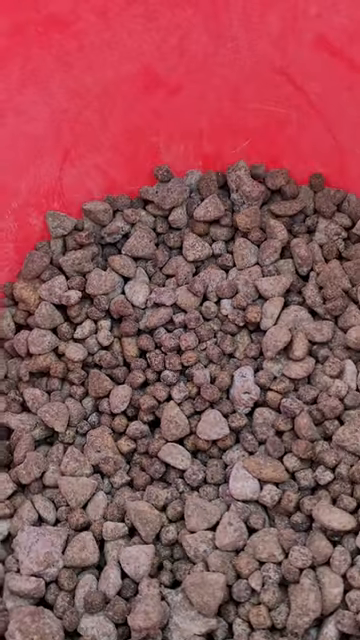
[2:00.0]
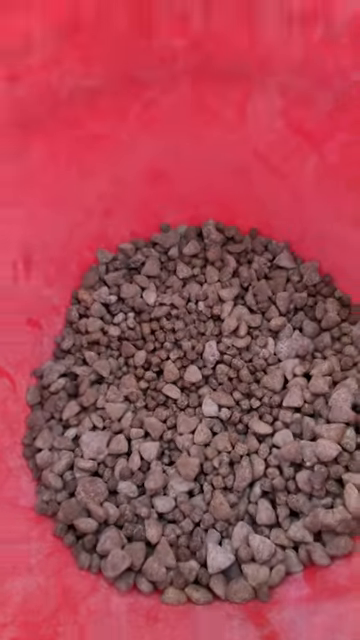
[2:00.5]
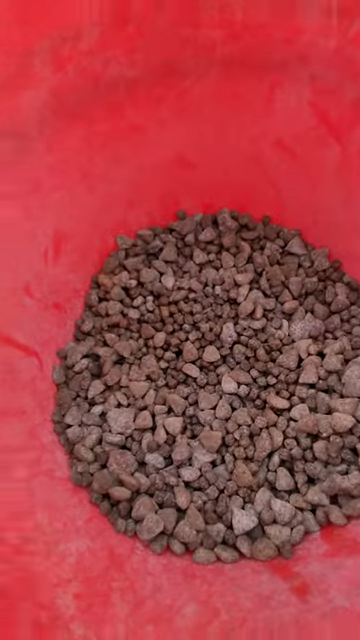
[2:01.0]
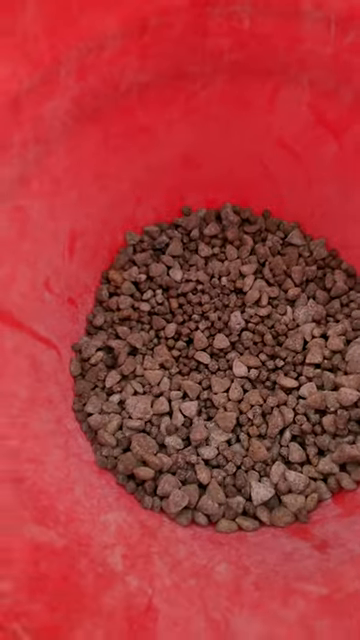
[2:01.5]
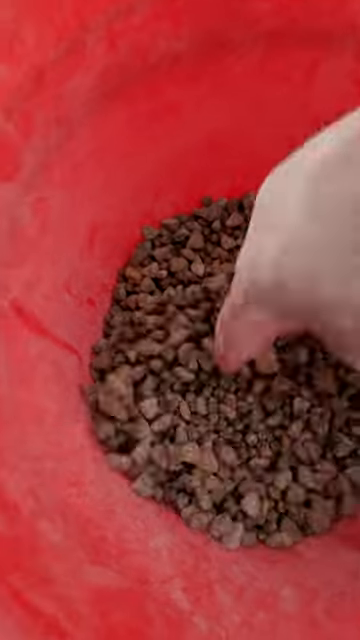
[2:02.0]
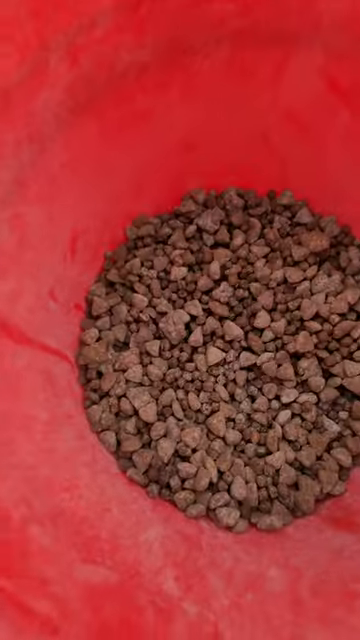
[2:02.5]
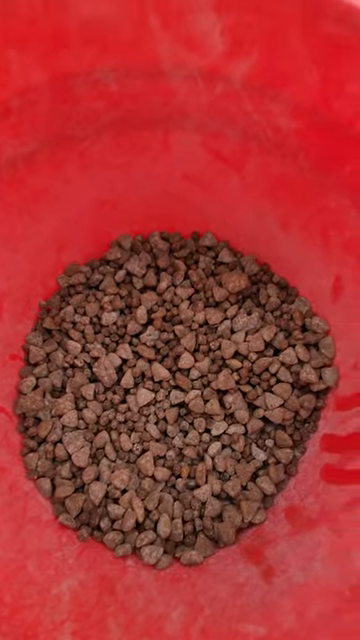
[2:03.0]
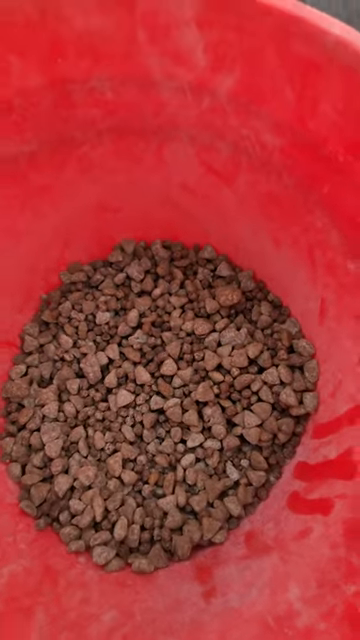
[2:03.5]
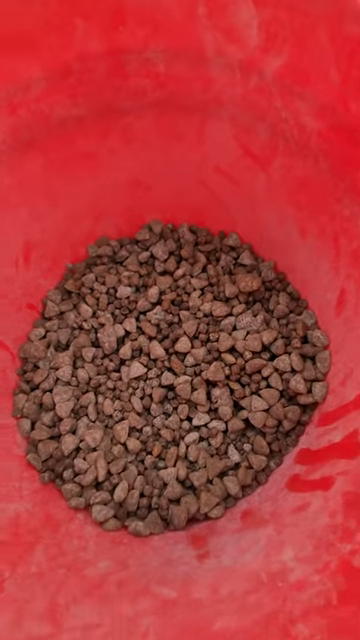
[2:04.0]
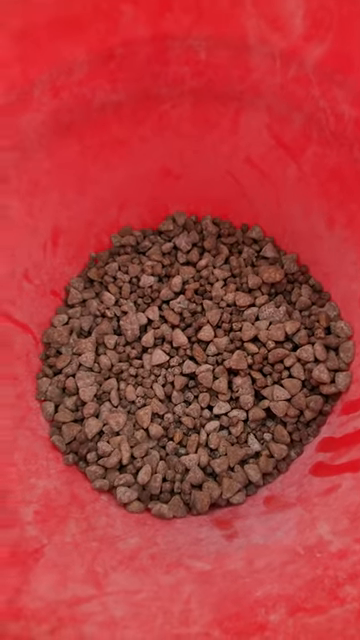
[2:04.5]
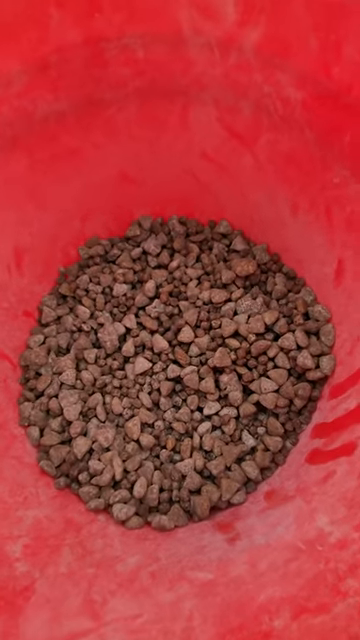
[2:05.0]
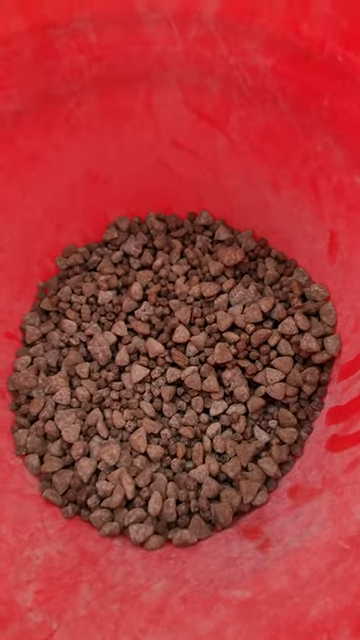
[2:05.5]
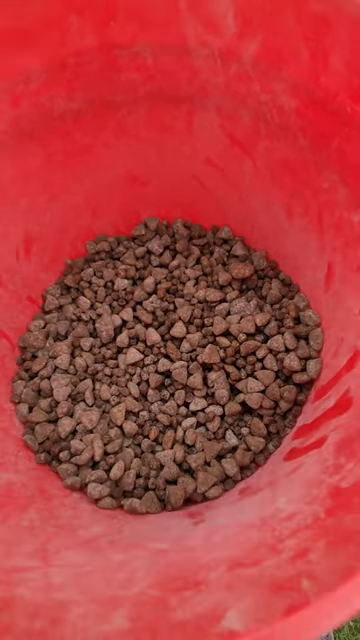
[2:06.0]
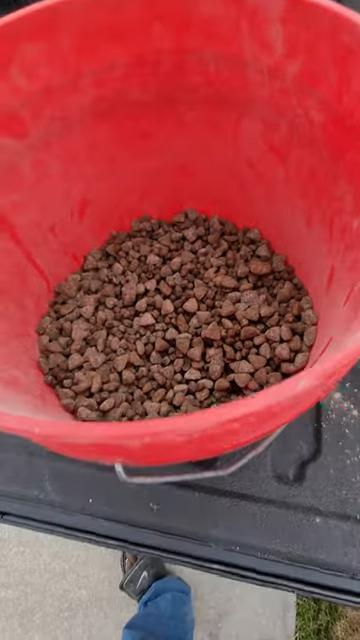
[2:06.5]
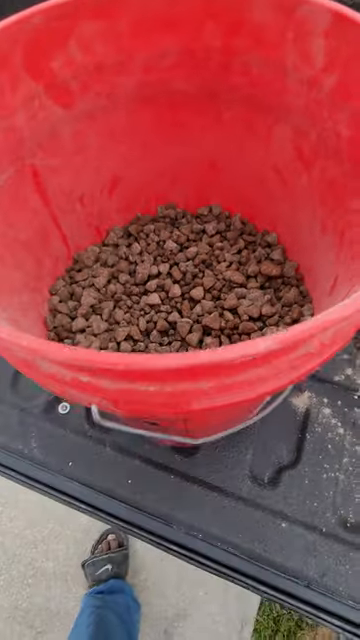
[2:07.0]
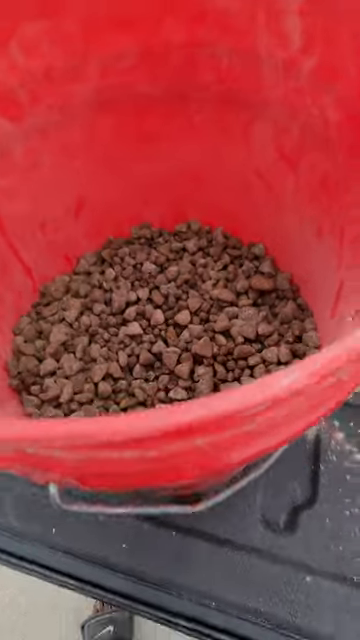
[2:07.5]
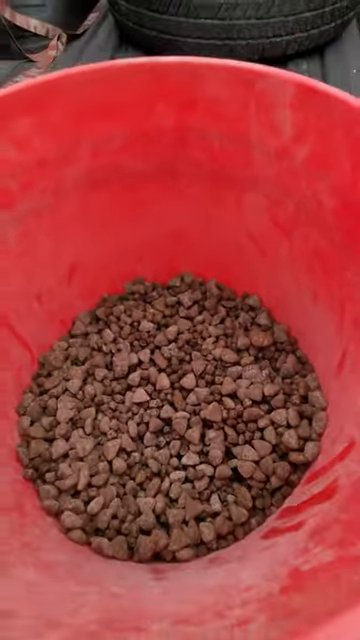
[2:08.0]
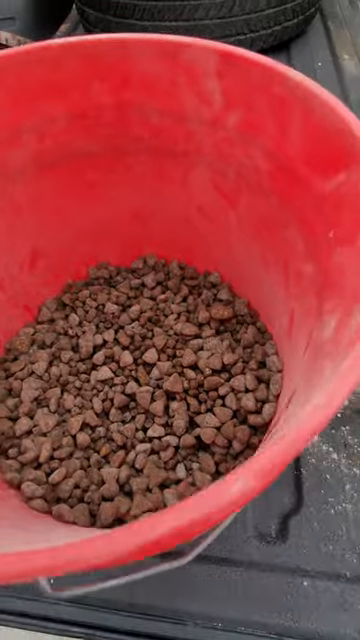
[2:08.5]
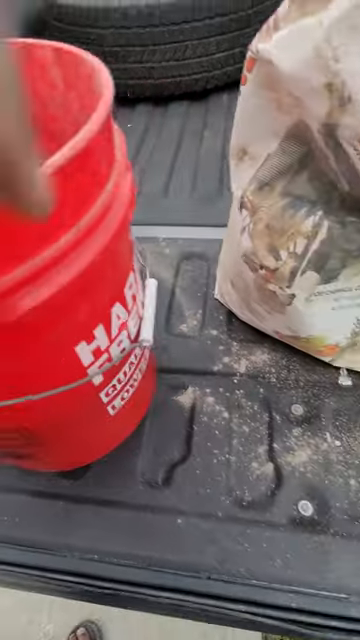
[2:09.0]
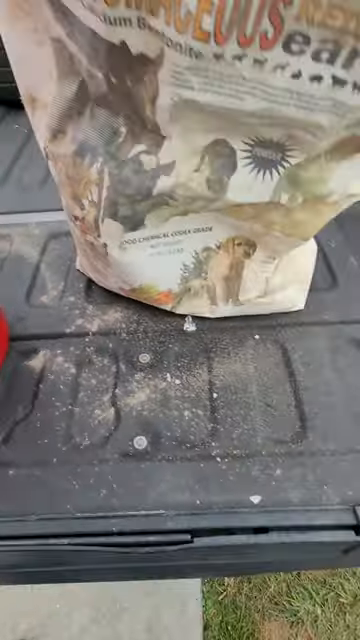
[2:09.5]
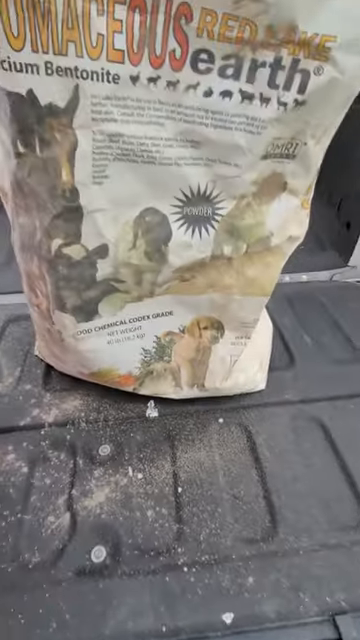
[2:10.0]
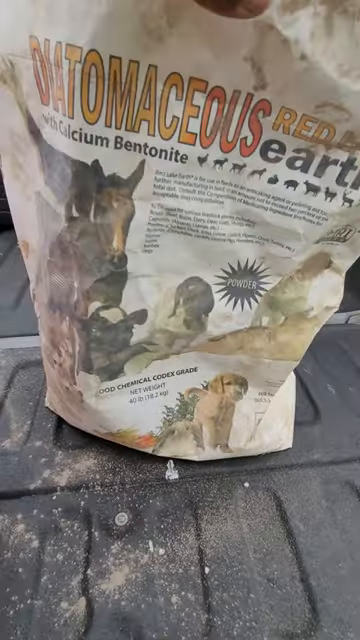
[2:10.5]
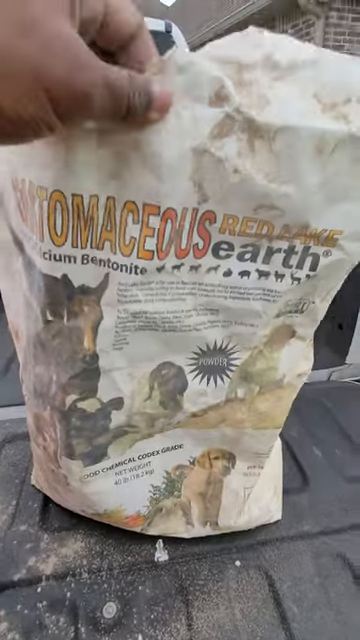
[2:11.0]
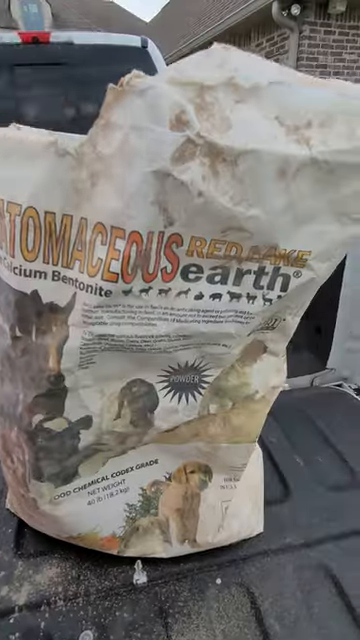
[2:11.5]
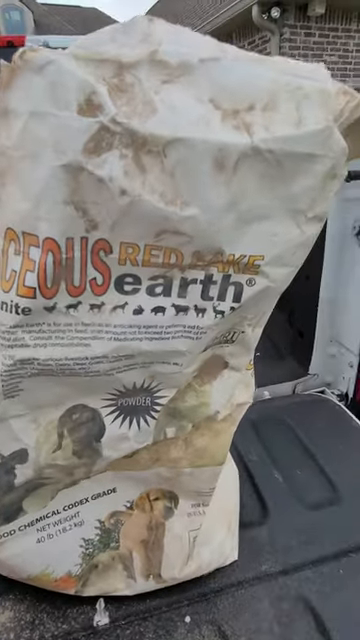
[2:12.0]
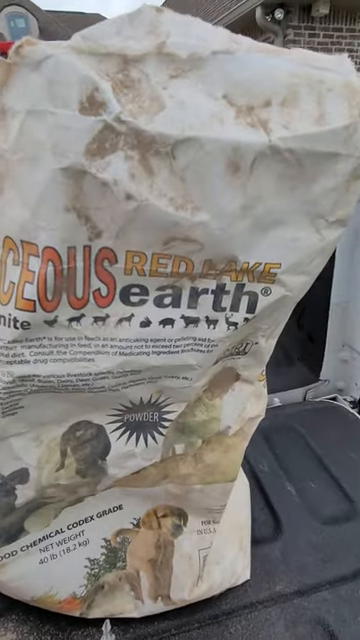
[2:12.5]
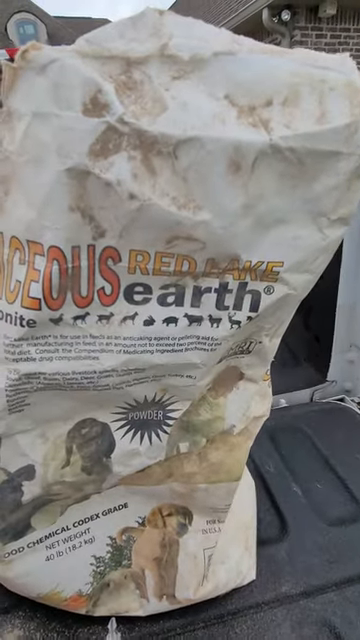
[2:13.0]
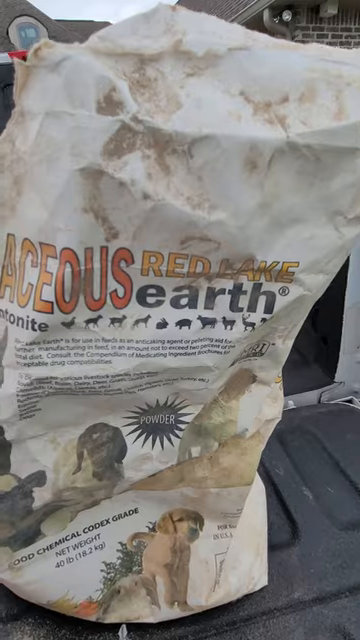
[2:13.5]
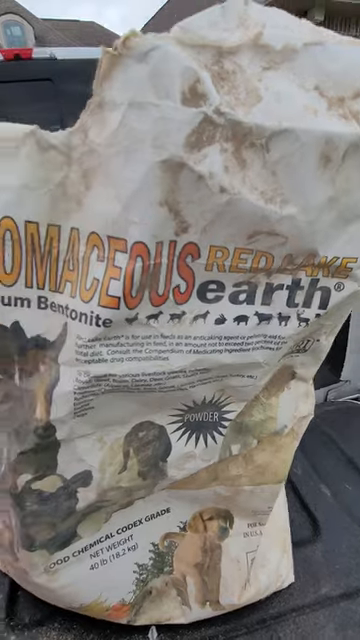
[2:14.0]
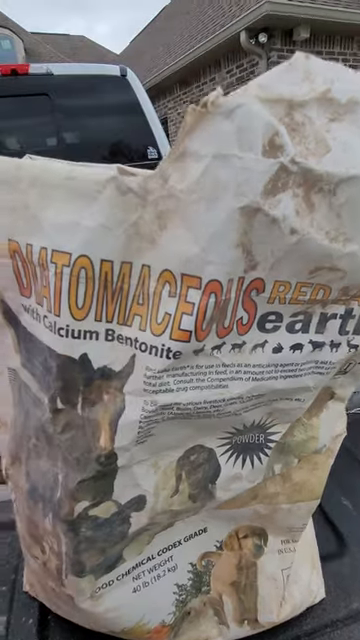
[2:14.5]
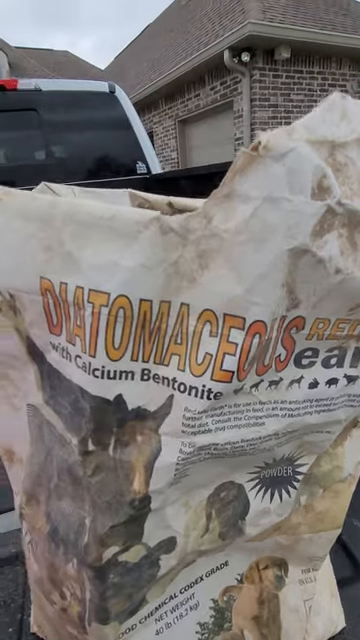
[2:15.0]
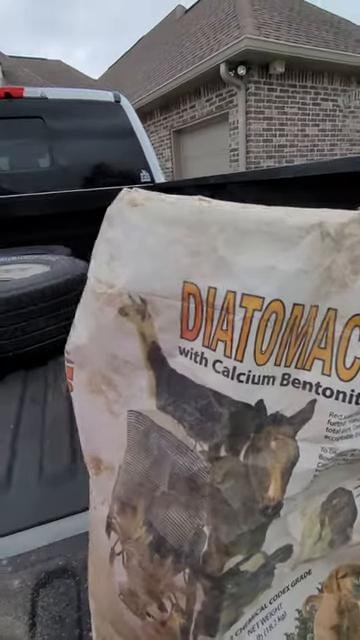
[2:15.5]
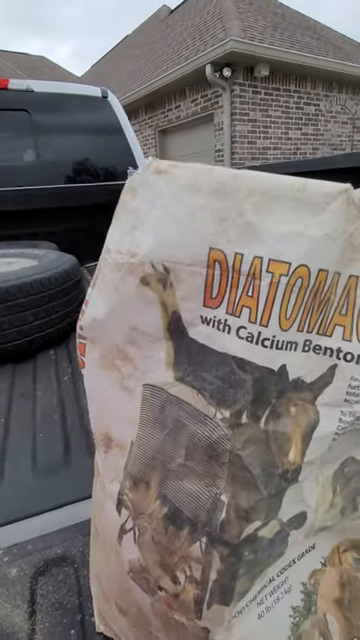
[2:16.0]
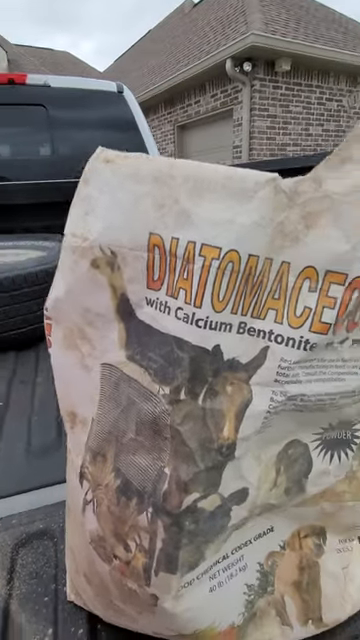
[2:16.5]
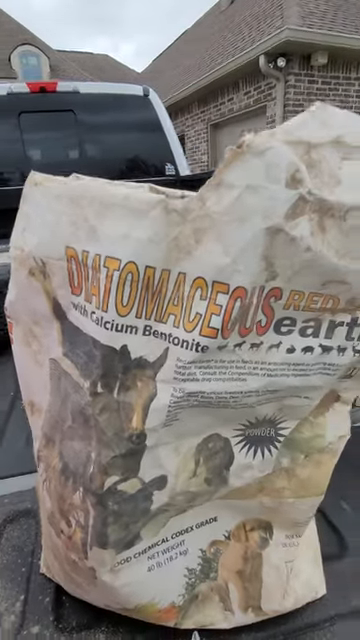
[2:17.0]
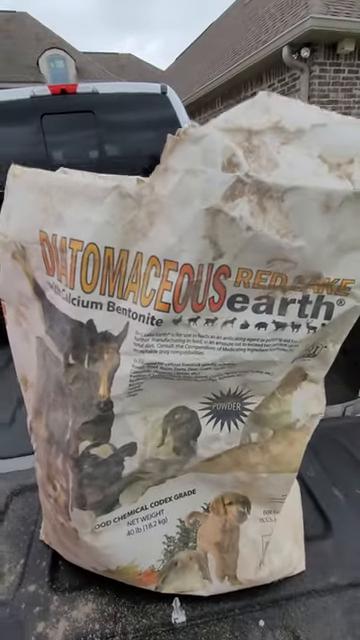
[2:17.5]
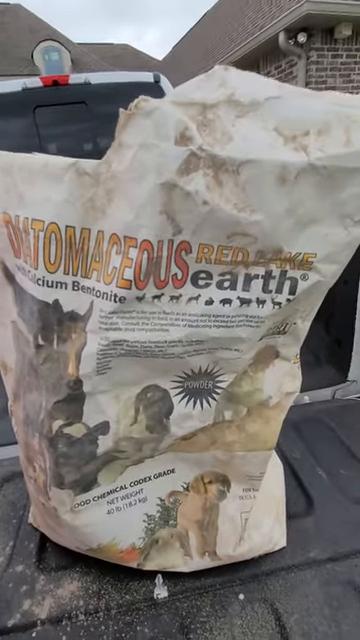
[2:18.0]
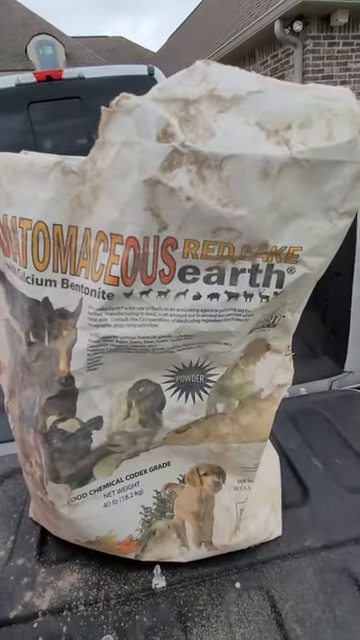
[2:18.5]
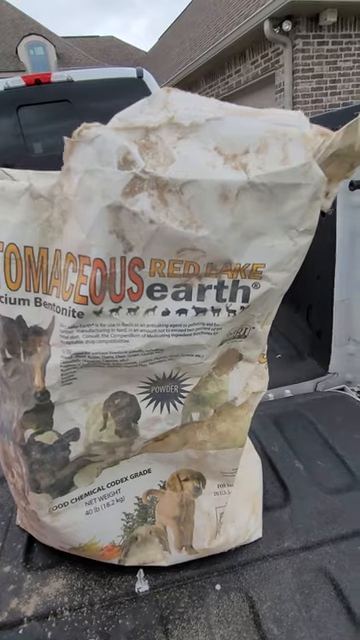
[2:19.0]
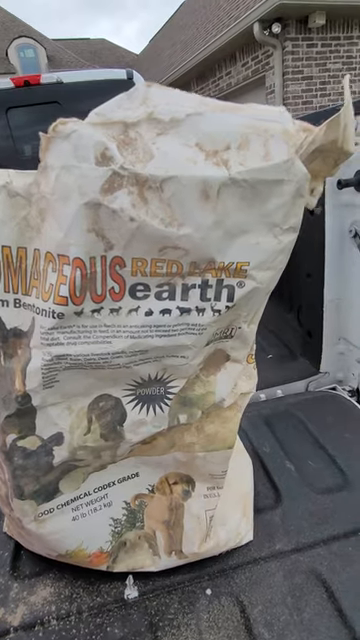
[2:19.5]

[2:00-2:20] The owner shows the food mixture of little stone shapes inside the red bucket, with the camera at the top of the bucket looking downward. The food appears to fill only about an eighth of the bucket, which is possibly a five-gallon bucket judging by its size. The owner takes the camera out of the bucket, briefly showing the owner's sandals on the ground, then switches back to the white bag and holds it up completely vertically. The white bag is then sitting on the bed of the truck. There also appears to be a tire in the truck bed near the back, and part of a house is in the distance, with a brick exterior, the roof and part of the sky above.